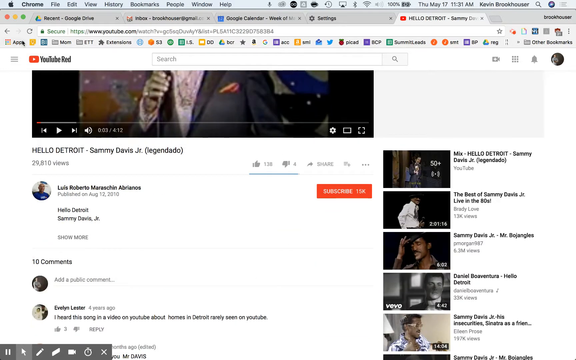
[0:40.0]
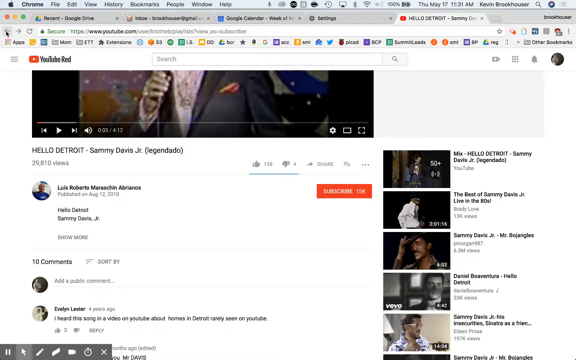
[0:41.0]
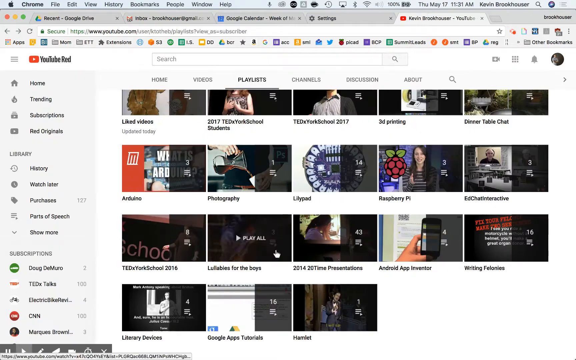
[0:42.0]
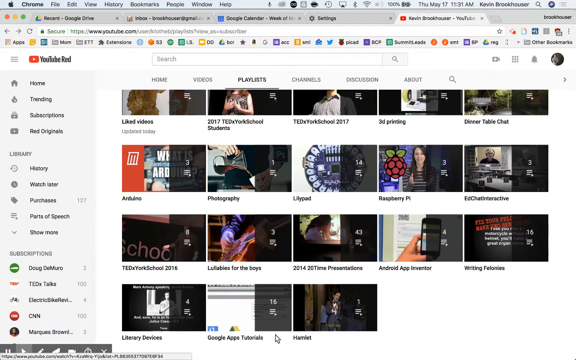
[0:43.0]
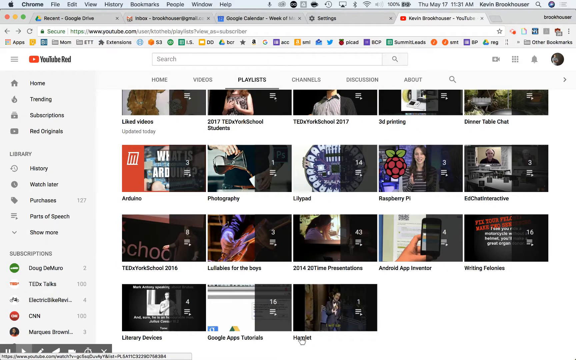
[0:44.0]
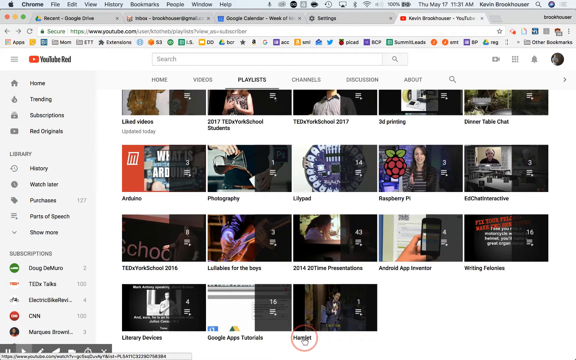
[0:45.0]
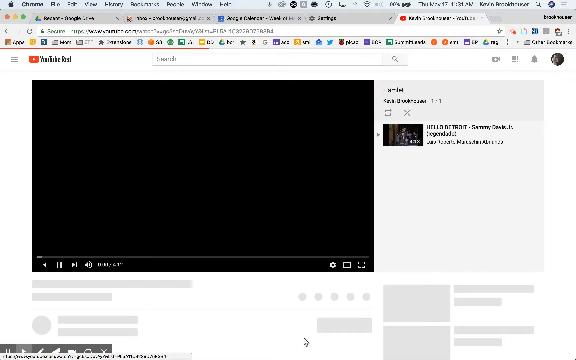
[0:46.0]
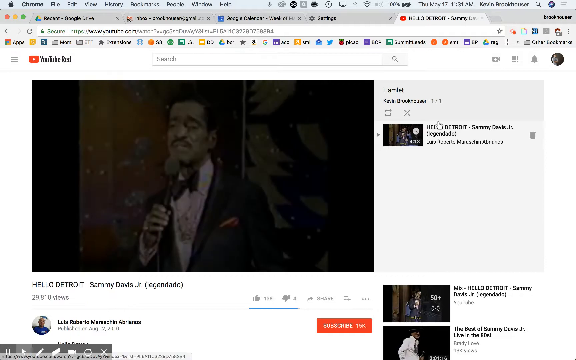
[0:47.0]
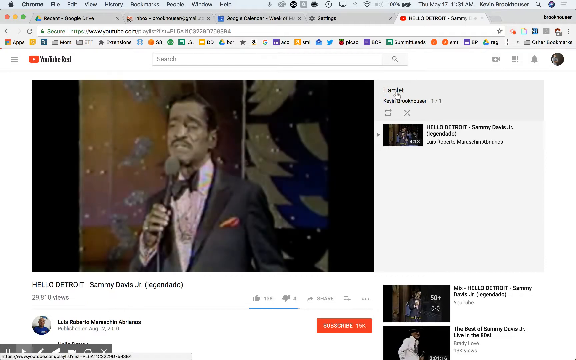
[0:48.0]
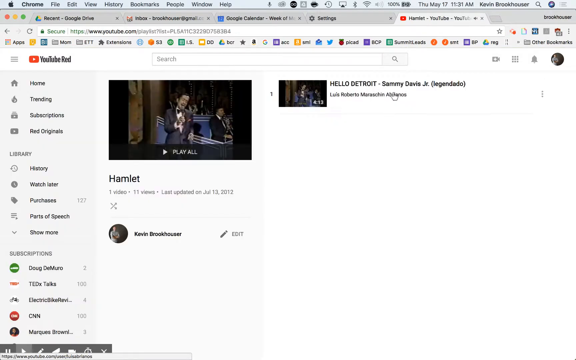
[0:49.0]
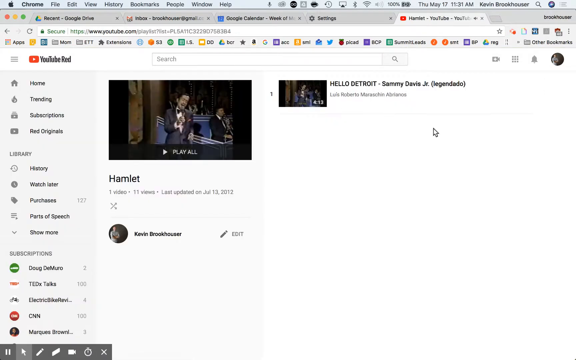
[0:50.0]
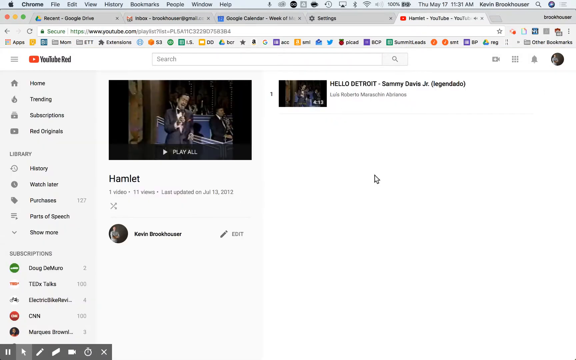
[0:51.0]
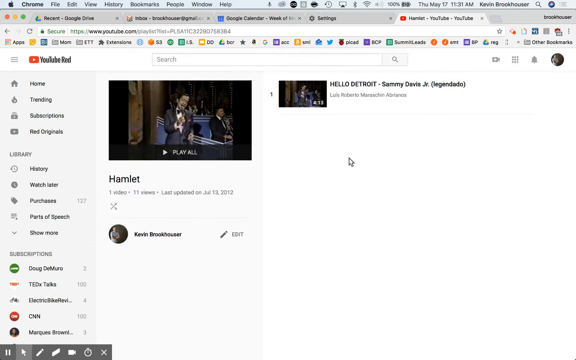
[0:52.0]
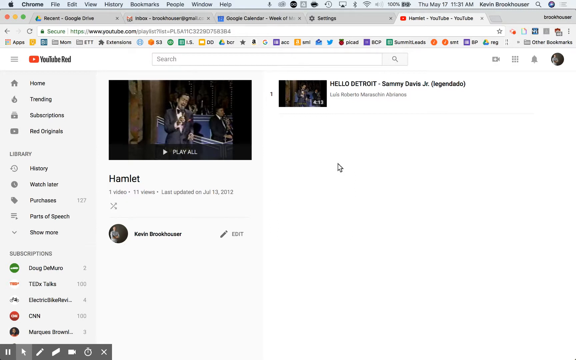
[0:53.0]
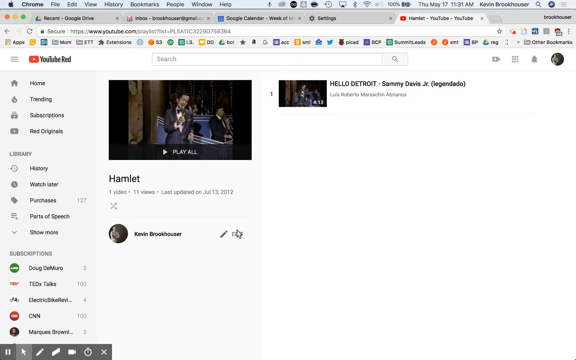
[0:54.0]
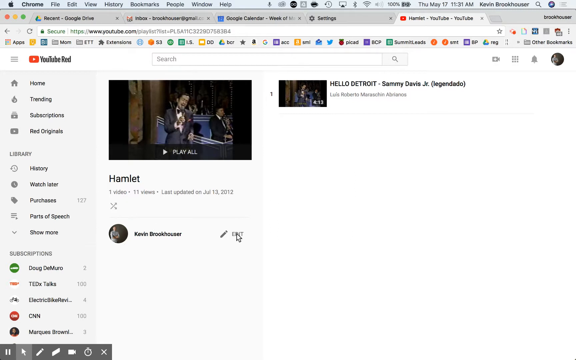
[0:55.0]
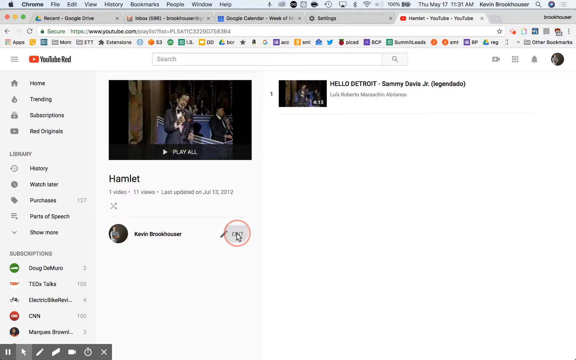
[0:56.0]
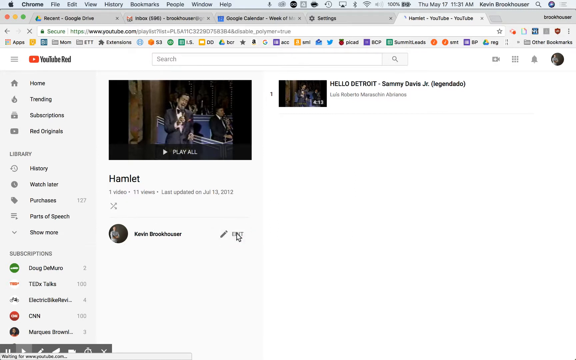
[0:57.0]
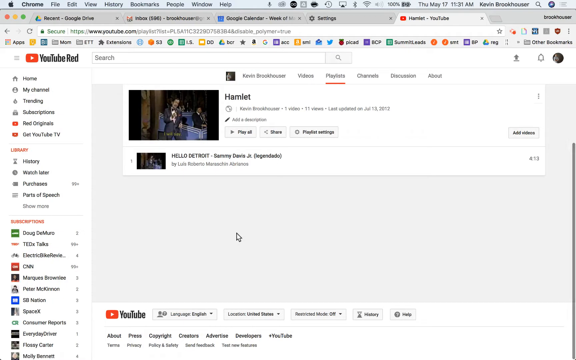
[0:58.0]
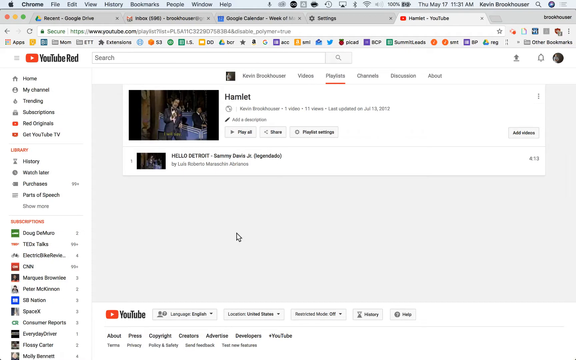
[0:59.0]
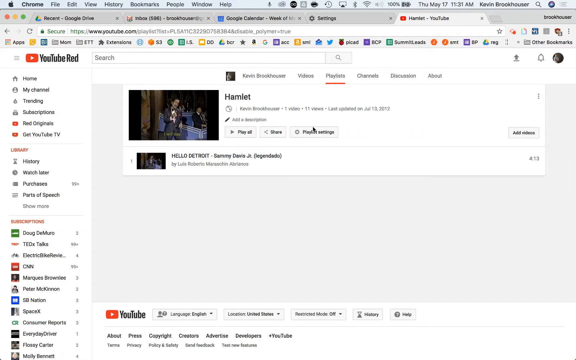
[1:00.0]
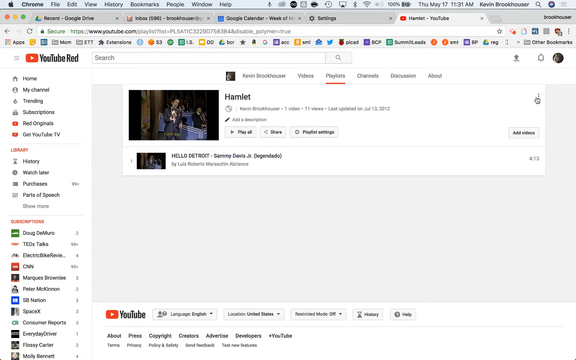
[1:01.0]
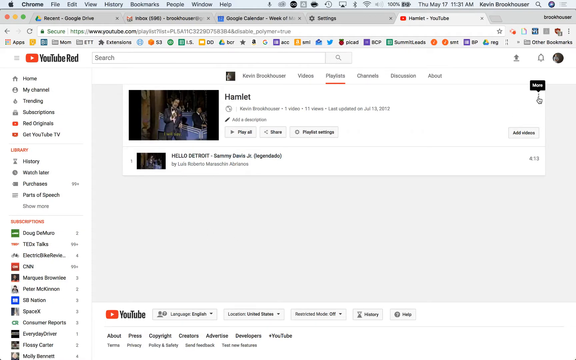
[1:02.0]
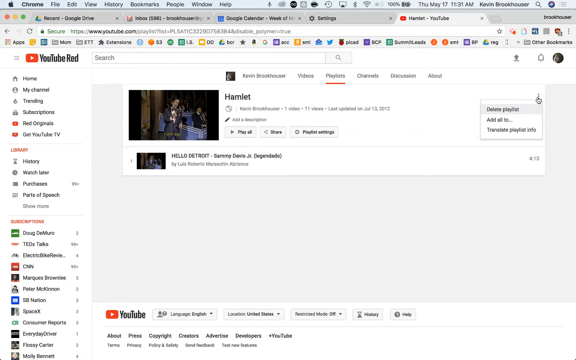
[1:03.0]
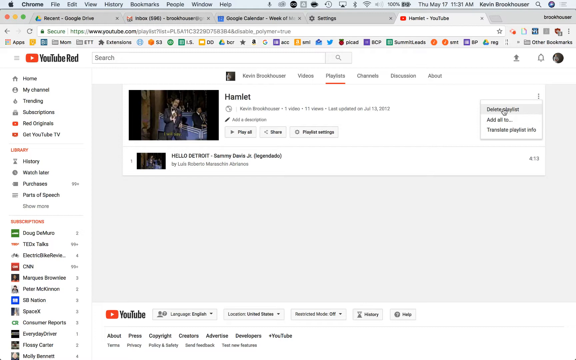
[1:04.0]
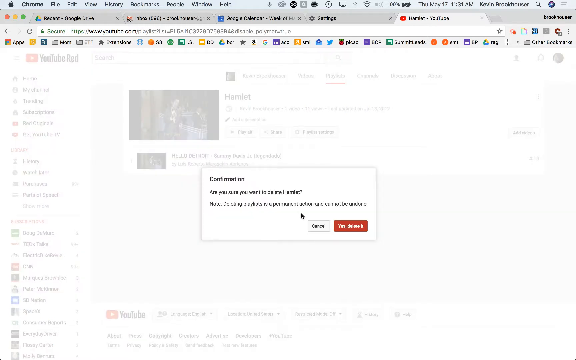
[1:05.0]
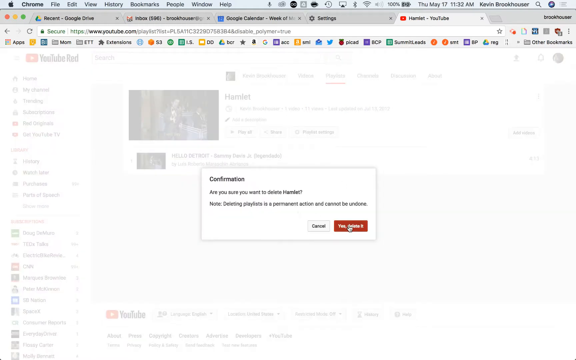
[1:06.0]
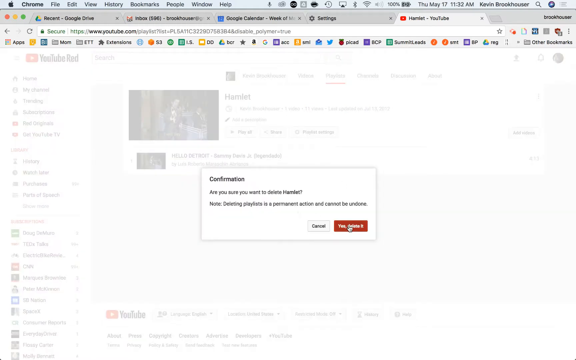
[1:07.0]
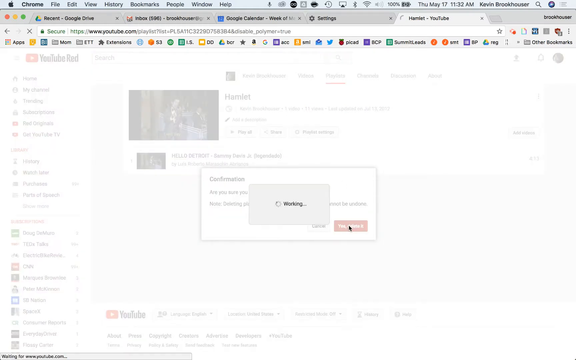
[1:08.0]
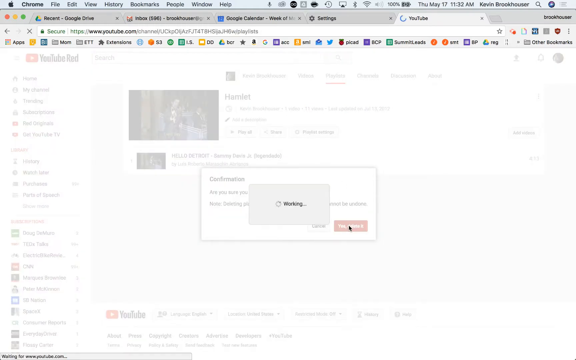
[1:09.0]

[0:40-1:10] He goes back to his playlists and clicks the same playlist again, going to the playlist itself and viewing the playlist video. He clicks to edit the playlist, points by his name and clicks it. He clicks a button that says "more" and deletes the playlist. A confirmation window pops up asking whether to delete this playlist, named Hamlet, with a note warning that the deletion is permanent and cannot be undone. A red box indicates that yes, he is sure, and the man clicks it. Another box pops up that says "working". It is no longer a playlist. He goes back to the video, which has 10 comments and is no longer part of any playlist on his account. The video is still posted by him on his account, and his name is visible on the uploaded video.